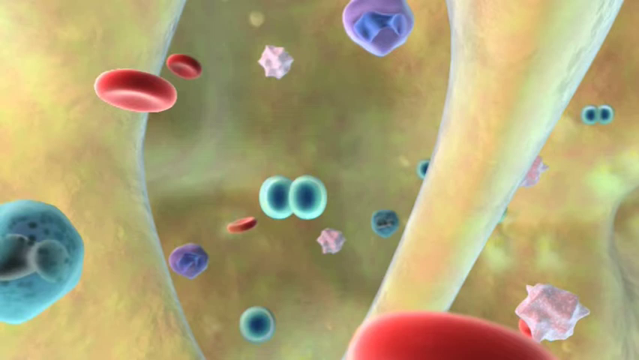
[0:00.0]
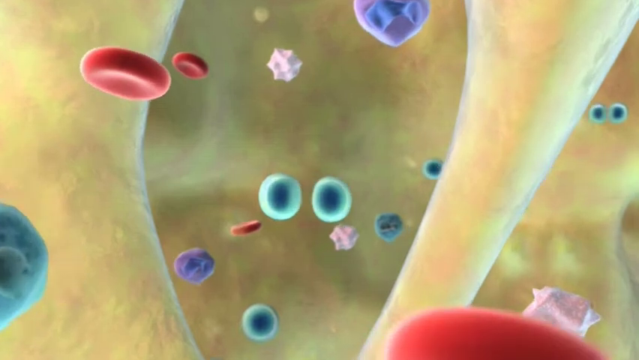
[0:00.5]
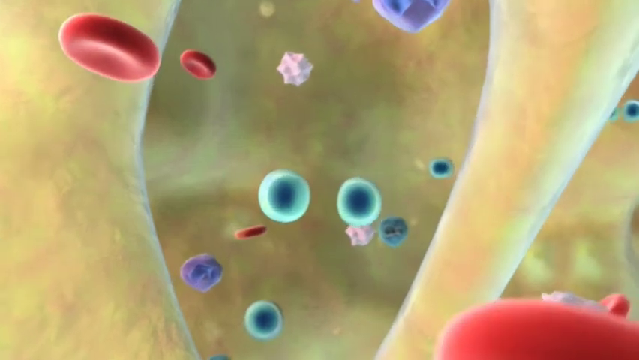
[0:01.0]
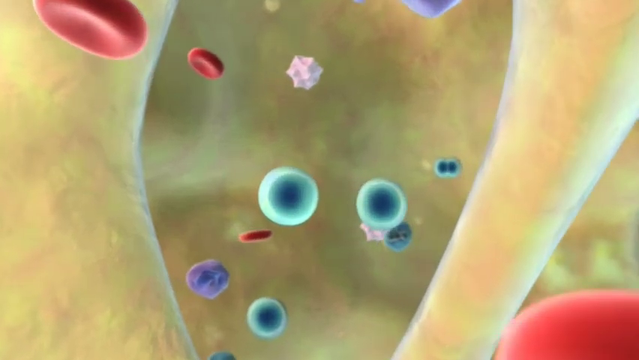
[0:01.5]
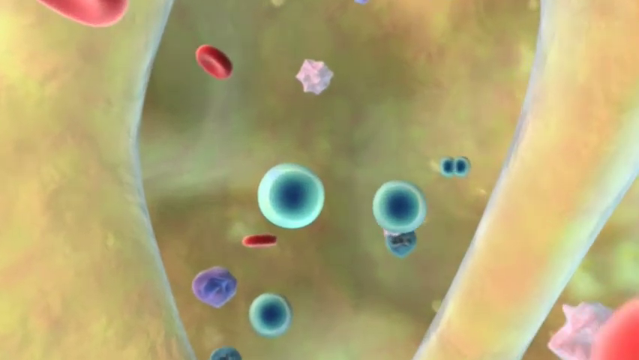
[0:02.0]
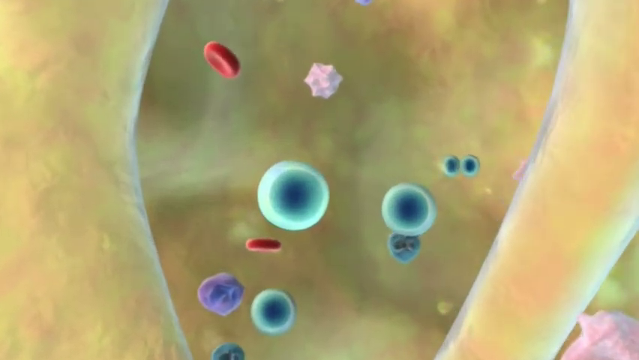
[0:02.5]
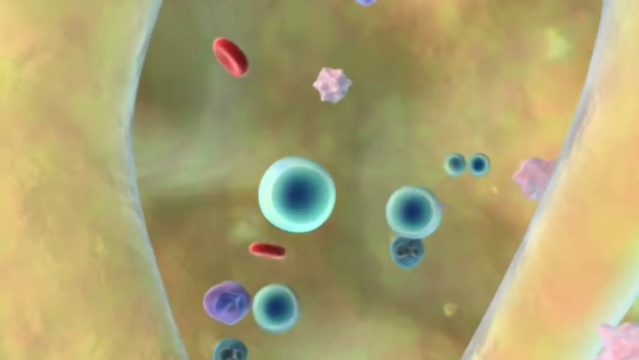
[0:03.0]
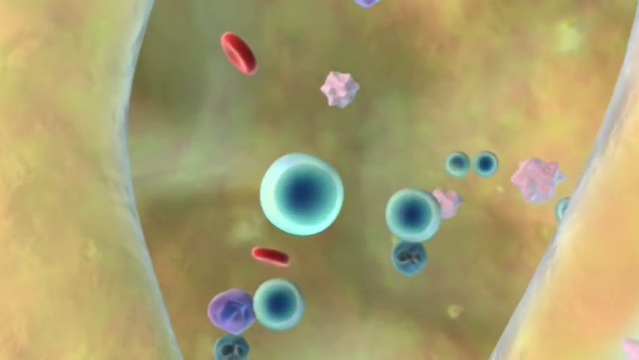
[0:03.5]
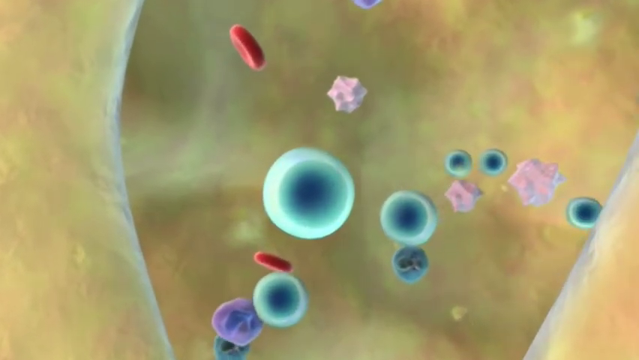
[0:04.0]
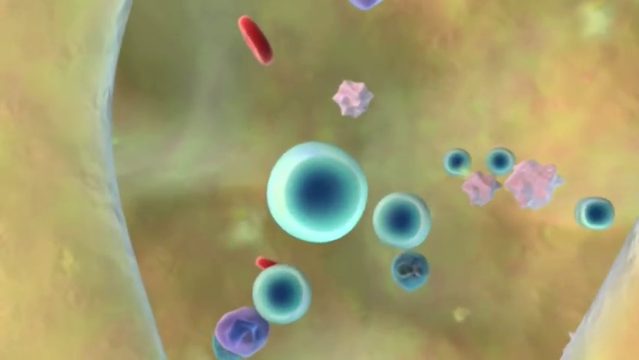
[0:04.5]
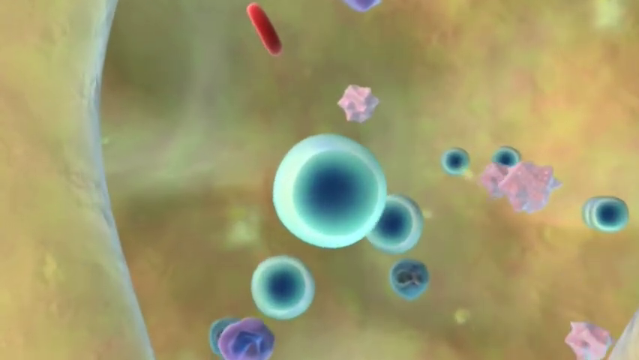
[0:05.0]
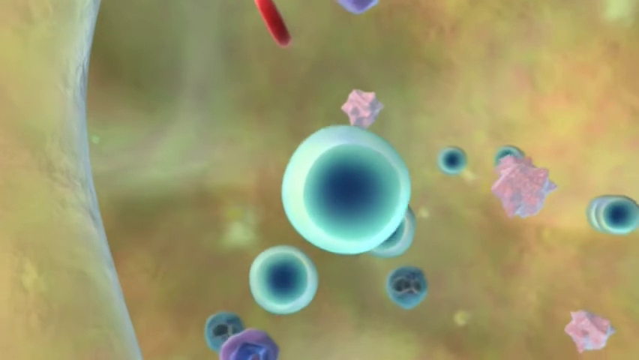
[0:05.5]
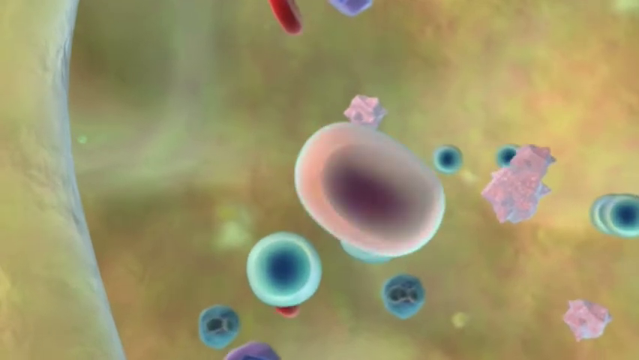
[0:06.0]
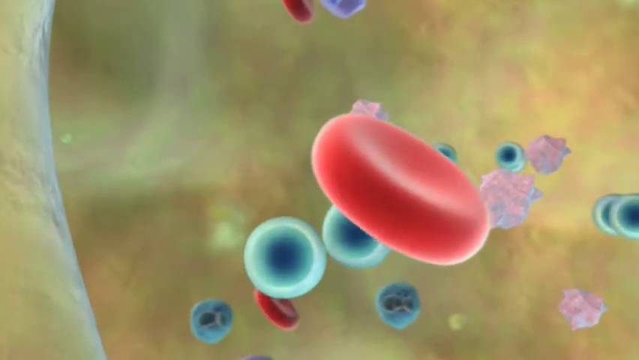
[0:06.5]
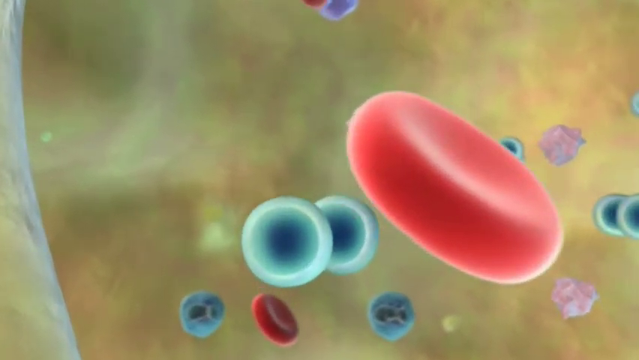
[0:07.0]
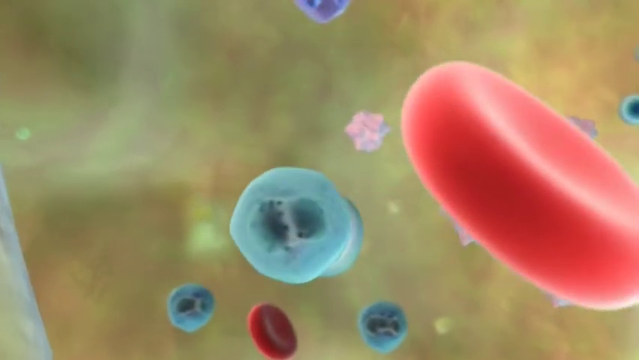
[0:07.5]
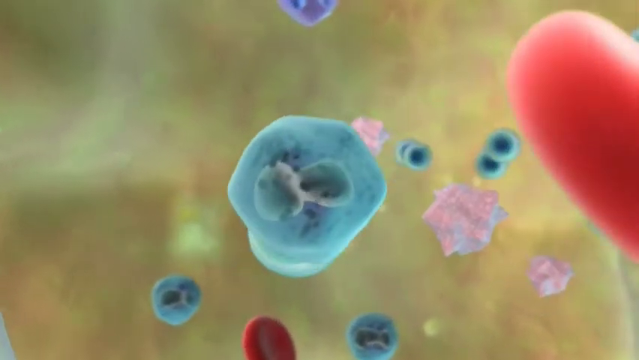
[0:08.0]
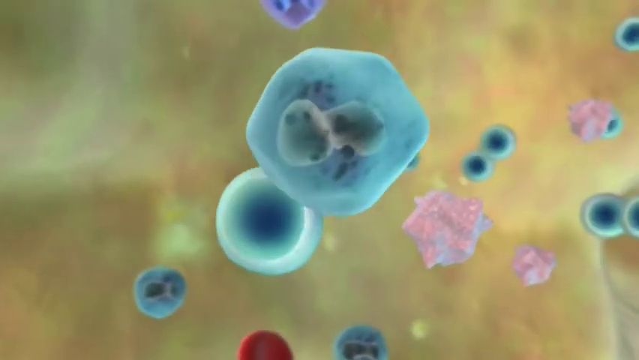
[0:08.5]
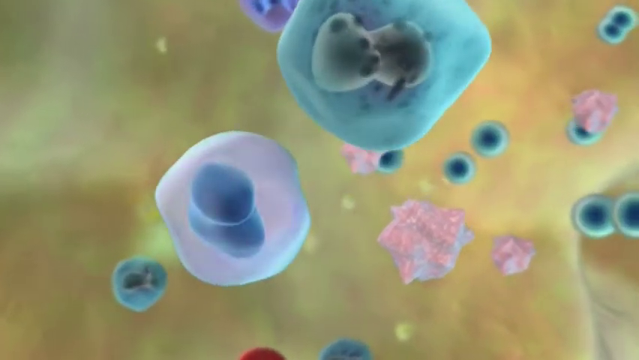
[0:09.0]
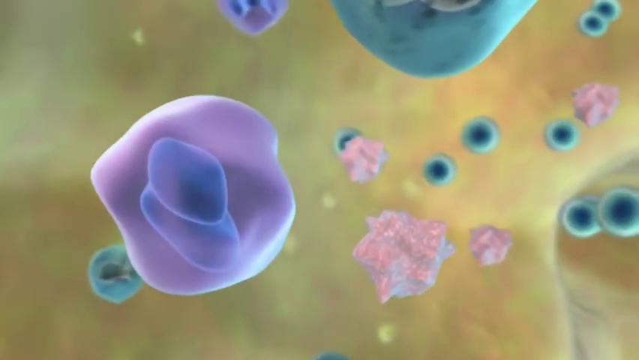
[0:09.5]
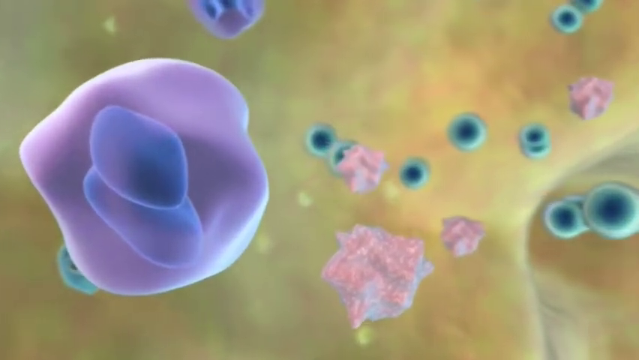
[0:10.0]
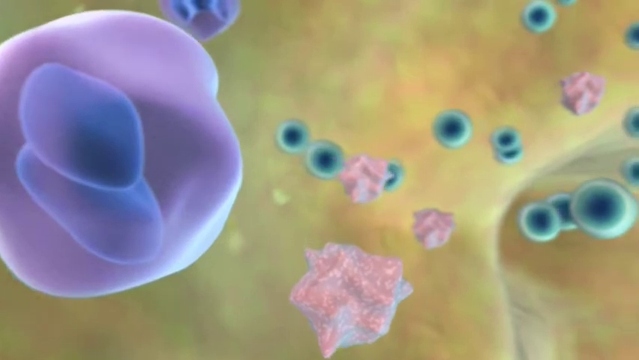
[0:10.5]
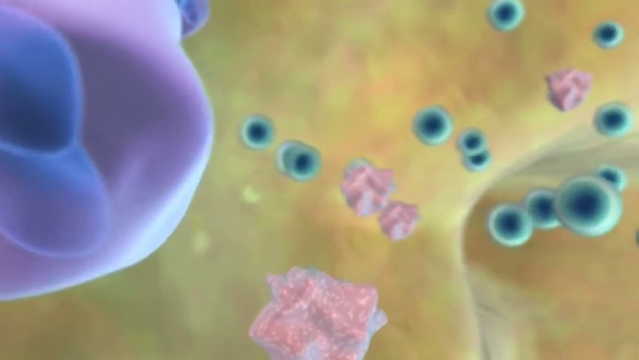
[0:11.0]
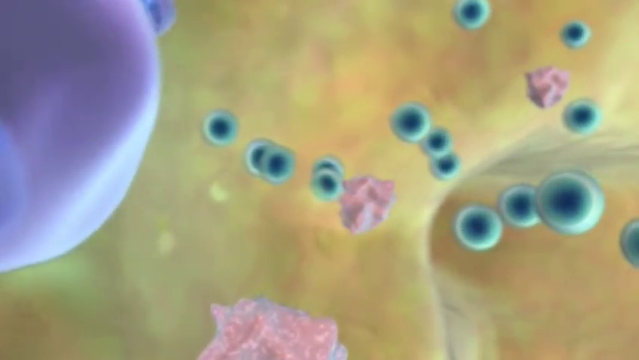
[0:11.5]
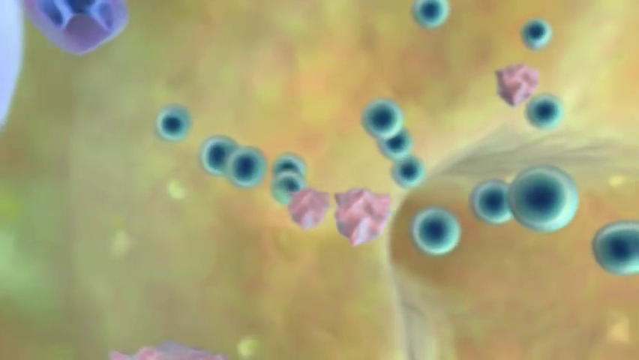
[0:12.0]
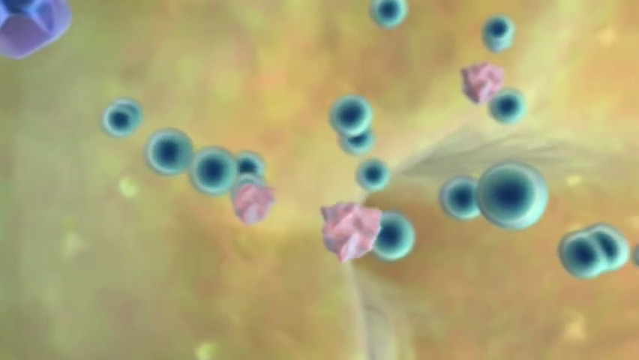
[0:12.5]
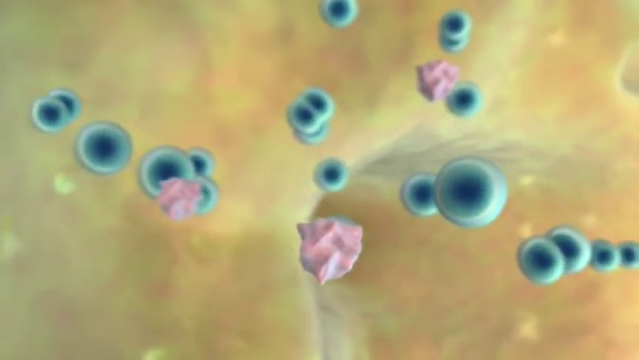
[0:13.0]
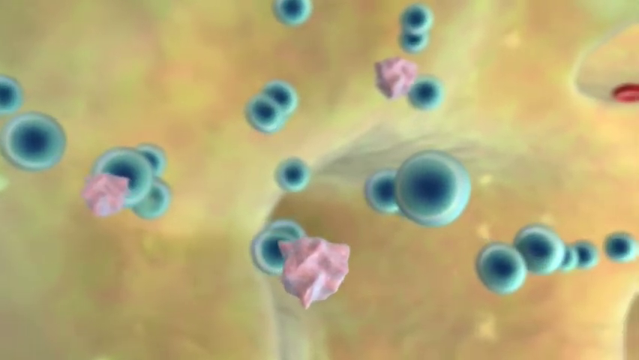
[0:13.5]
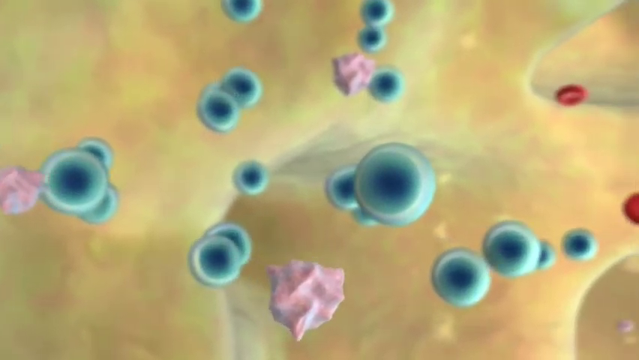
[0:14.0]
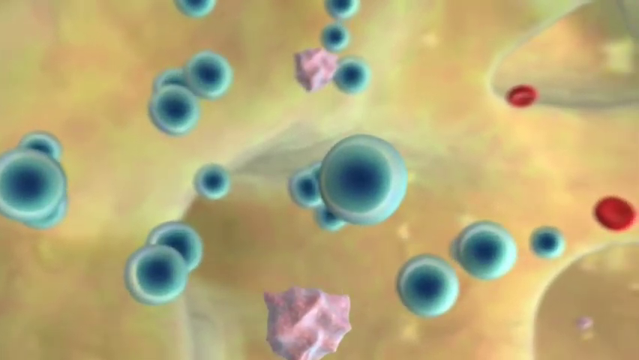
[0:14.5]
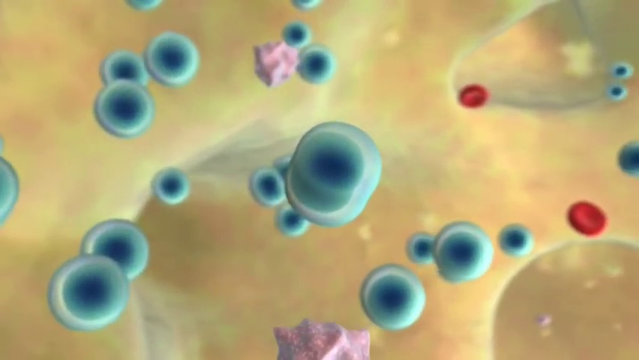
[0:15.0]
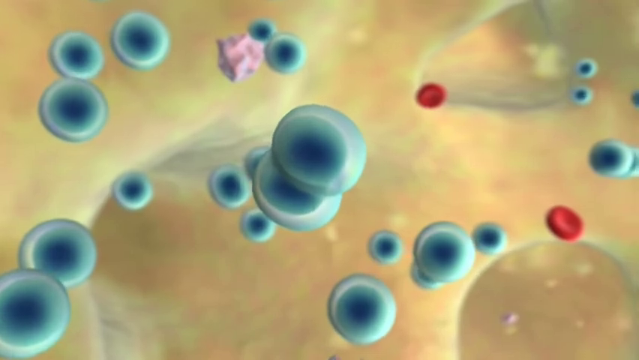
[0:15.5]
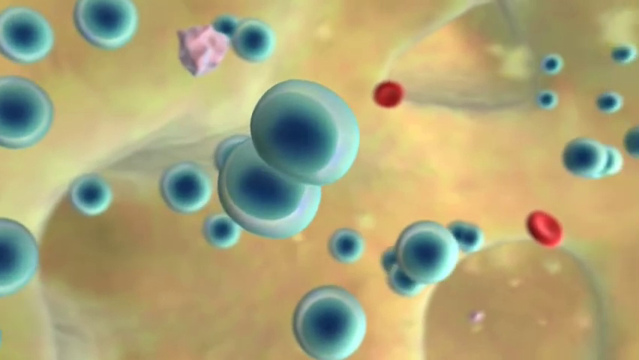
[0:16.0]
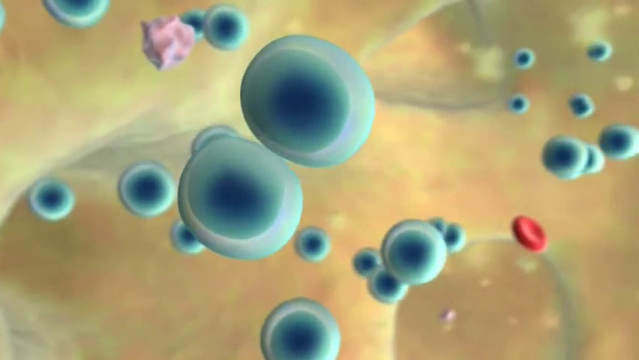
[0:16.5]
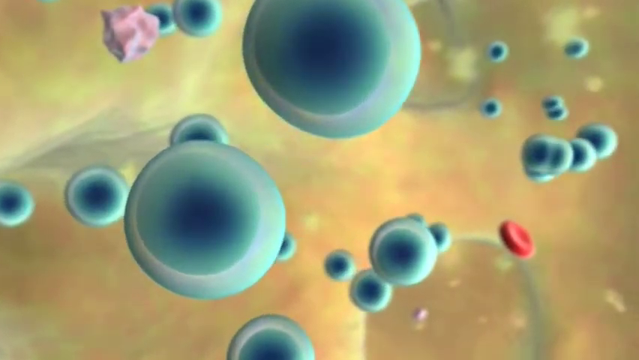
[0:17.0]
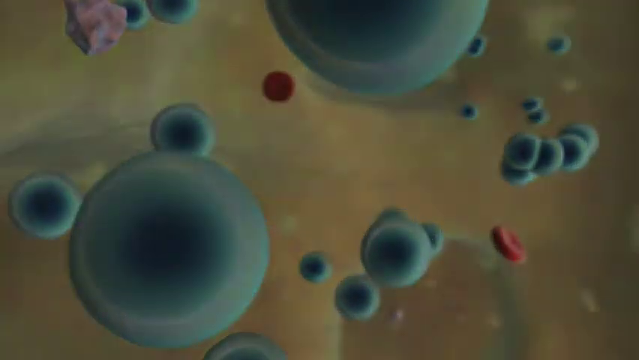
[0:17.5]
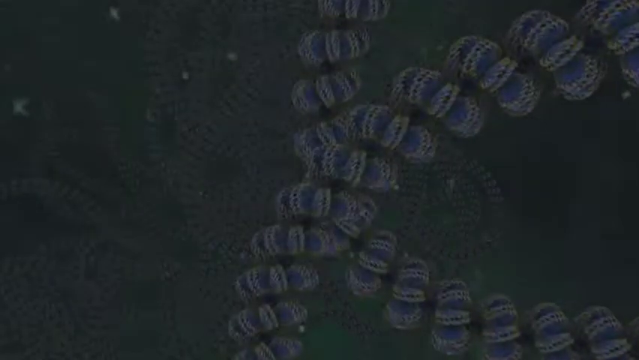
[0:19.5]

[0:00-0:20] The scene appears to be somewhere inside the body, with cells floating around that appear to be transforming. Most are blue/green cells, there are several pink ones, and there is what looks to be a red blood cell as well. The background is a kind of yellowy green colour. One of the blue cells transforms into a red cell, visually almost like a deoxygenated blood cell becoming oxygenated. Another blue cell changes into a blue, kind of circular shape with a white shape in the middle, whose nature is unclear. The camera pans to the right, revealing between 10 and 20 more of these blue cells and a couple of red blood cells. The video then fades to black as it transitions to the next screen.